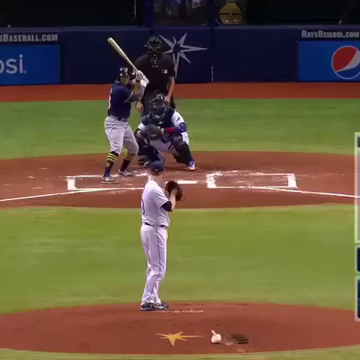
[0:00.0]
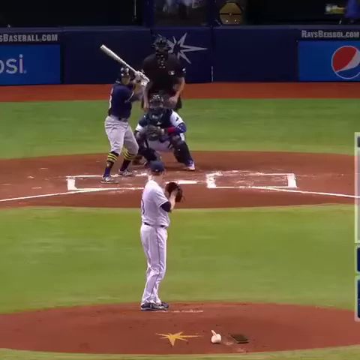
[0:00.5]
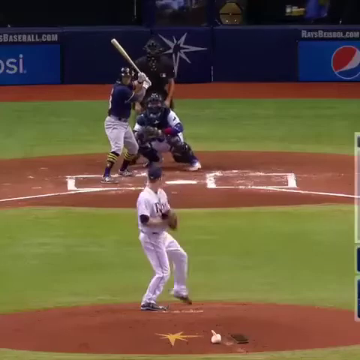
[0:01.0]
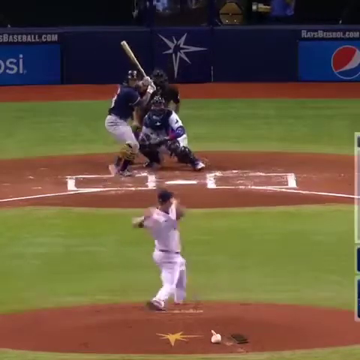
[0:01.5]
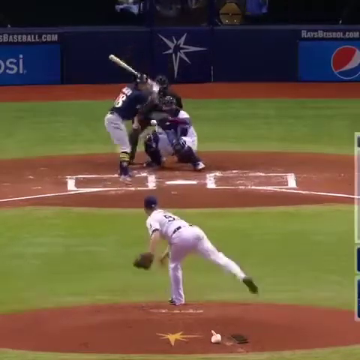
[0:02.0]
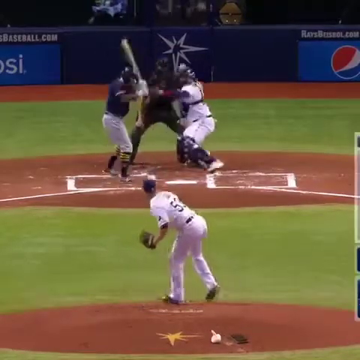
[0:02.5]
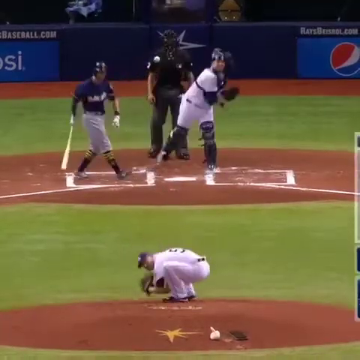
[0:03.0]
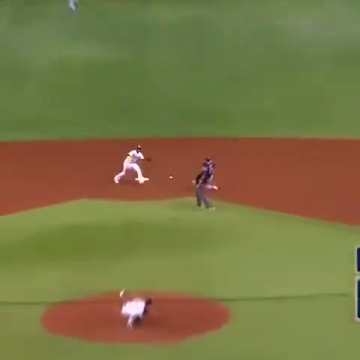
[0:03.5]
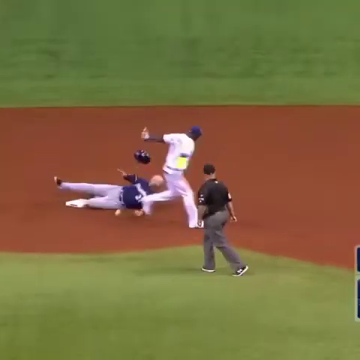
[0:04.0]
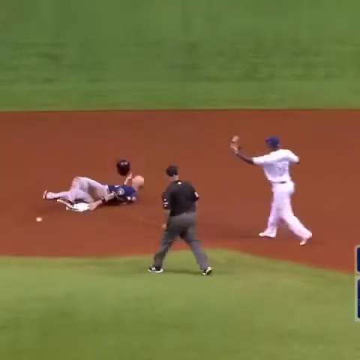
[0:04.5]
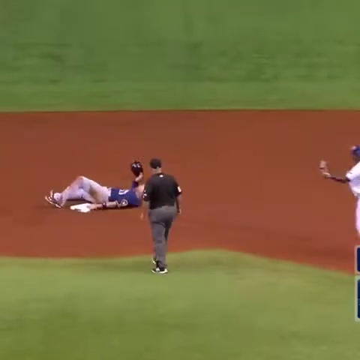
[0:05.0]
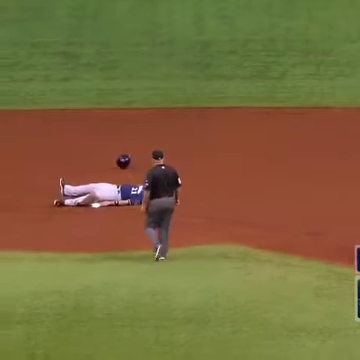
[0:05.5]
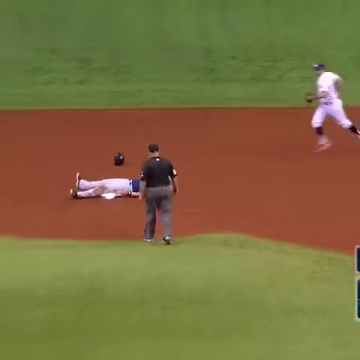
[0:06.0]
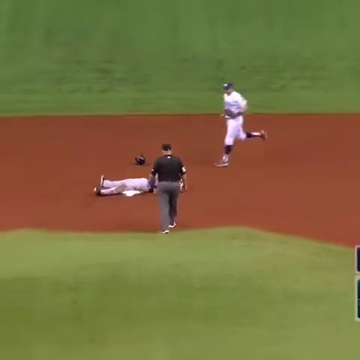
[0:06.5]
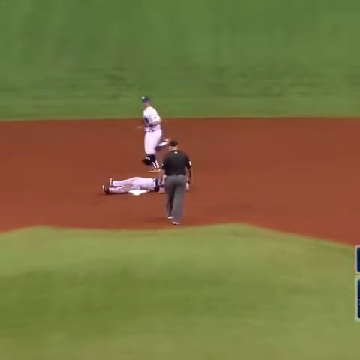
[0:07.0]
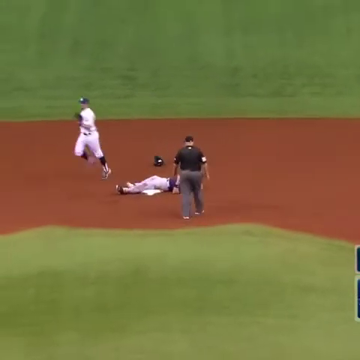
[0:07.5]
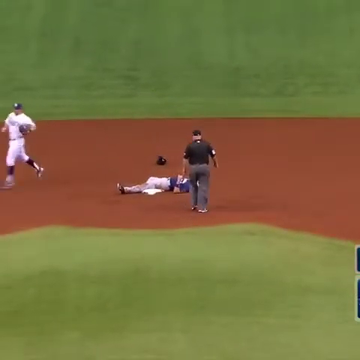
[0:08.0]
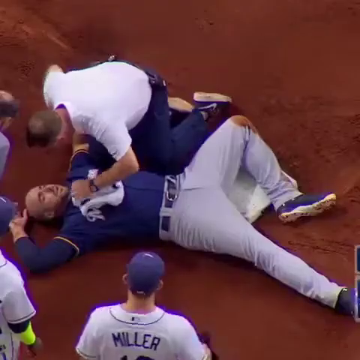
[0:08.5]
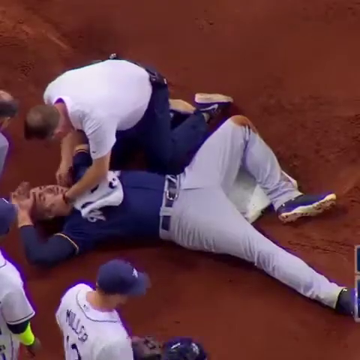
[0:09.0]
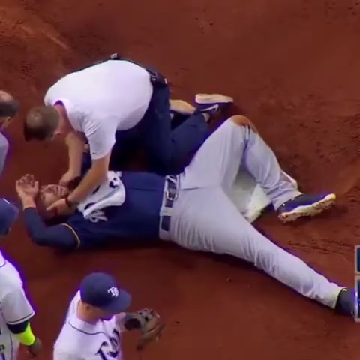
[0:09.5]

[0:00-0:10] Four people are on a baseball field. Closest to the camera, centered in the frame, a person stands in profile with their body facing right, arms raised and bent at the elbows close to their chest, a dark brown baseball mitt in their left hand, and their head turned toward the background. A catcher crouches low to the ground in a full catcher's uniform, including a helmet, a glove and shin guards. Behind the catcher is a person all in black, and in front of the catcher is a person holding a bat. The batter wears white gloves, has their body partially oriented to the side and knees slightly bent, and holds a white bat over their head with arms raised and bent at the elbows. The pitcher throws the ball with their left arm in a wide, sweeping, fast motion, stepping out first with the left leg and then with the right. The batter steps with their left foot, then moves their entire body backwards, thrusting the hip back to avoid the ball. The catcher then stands up and throws the ball back to the pitcher.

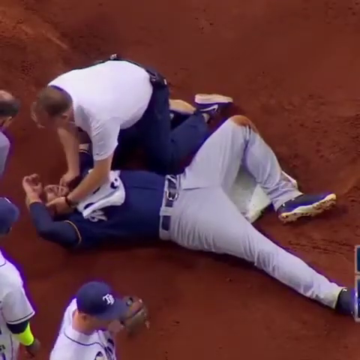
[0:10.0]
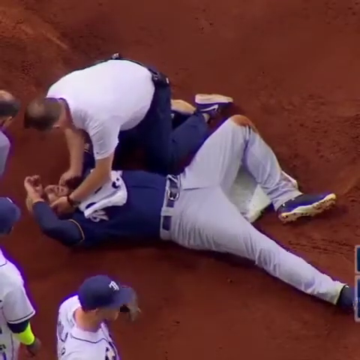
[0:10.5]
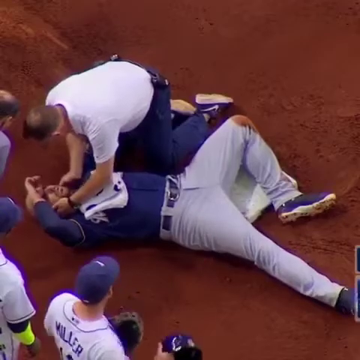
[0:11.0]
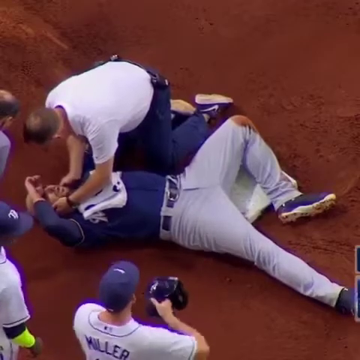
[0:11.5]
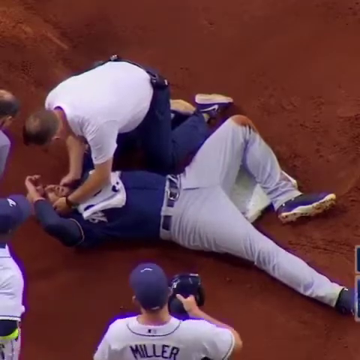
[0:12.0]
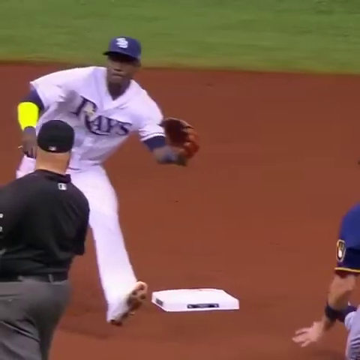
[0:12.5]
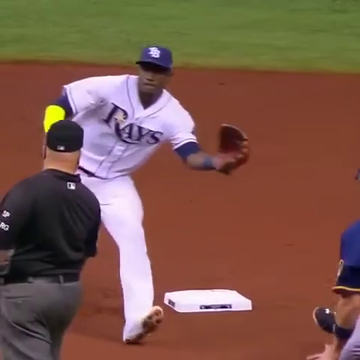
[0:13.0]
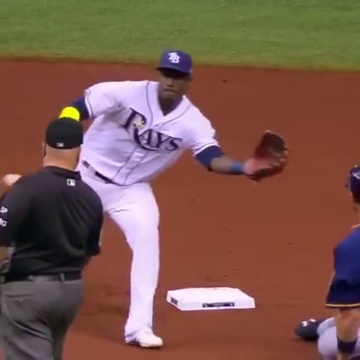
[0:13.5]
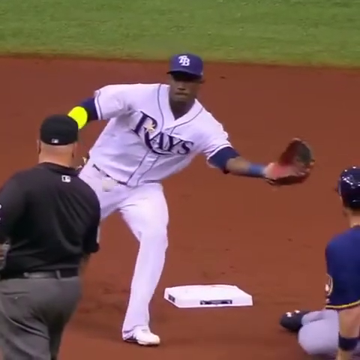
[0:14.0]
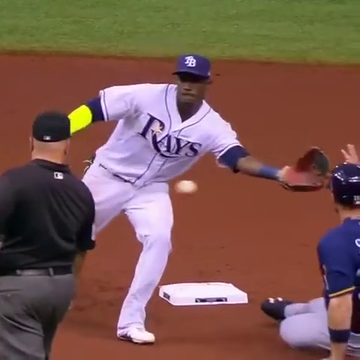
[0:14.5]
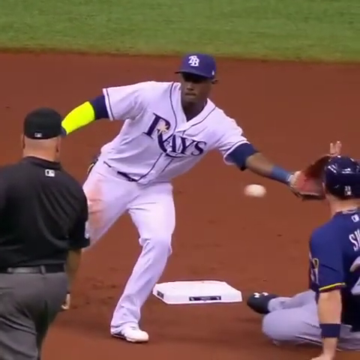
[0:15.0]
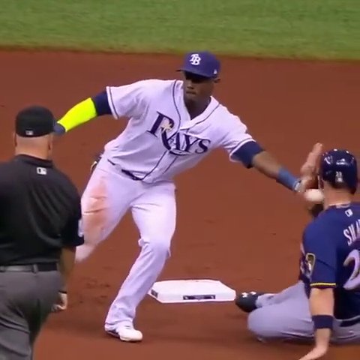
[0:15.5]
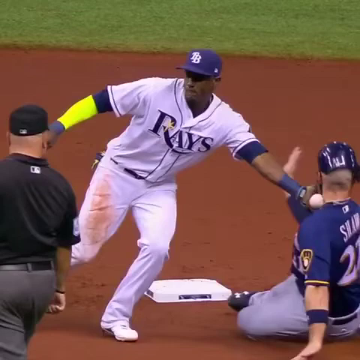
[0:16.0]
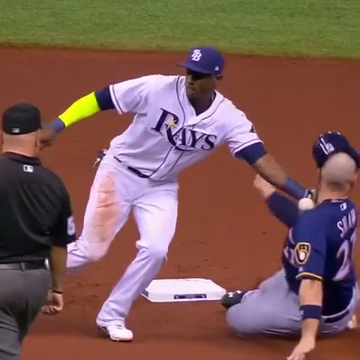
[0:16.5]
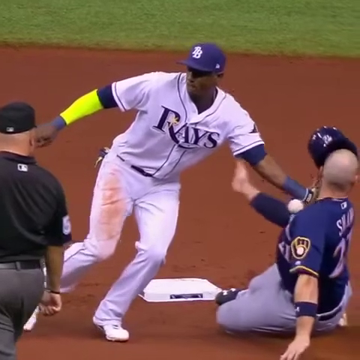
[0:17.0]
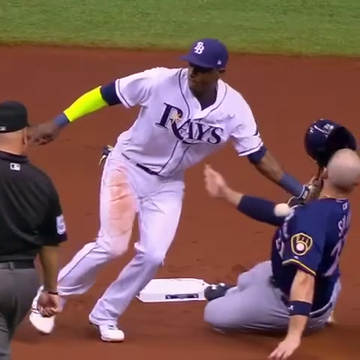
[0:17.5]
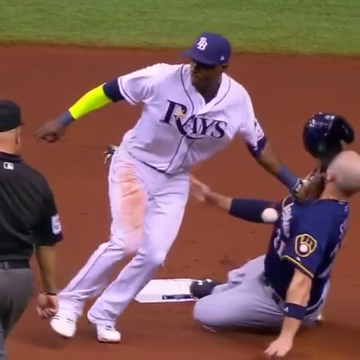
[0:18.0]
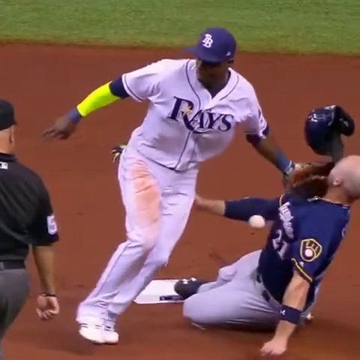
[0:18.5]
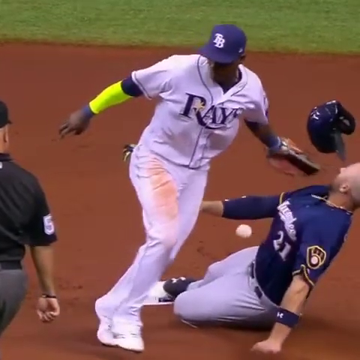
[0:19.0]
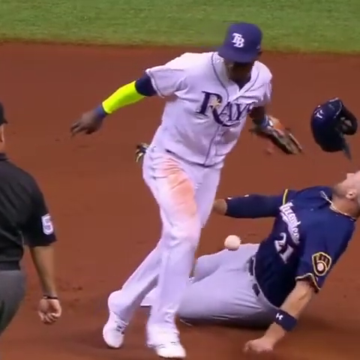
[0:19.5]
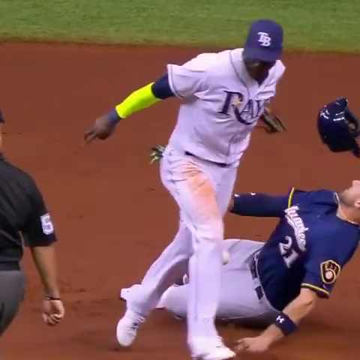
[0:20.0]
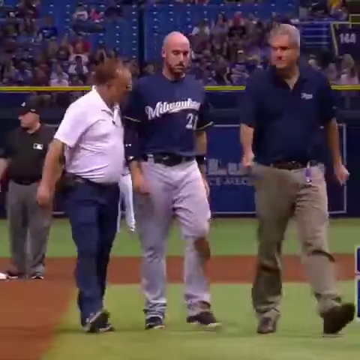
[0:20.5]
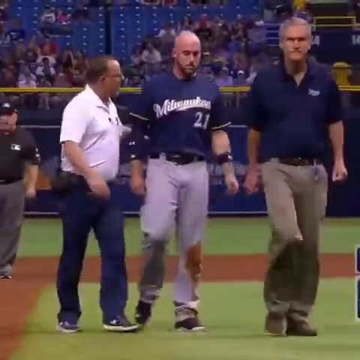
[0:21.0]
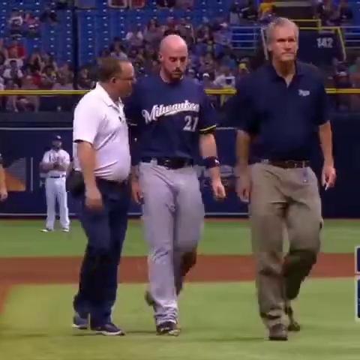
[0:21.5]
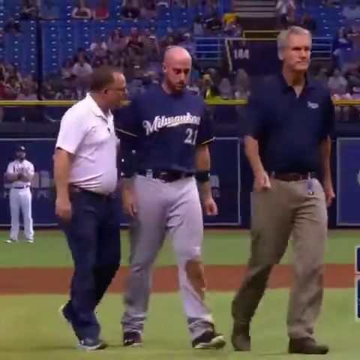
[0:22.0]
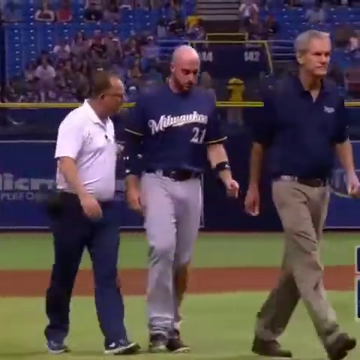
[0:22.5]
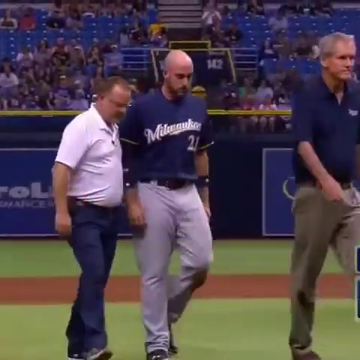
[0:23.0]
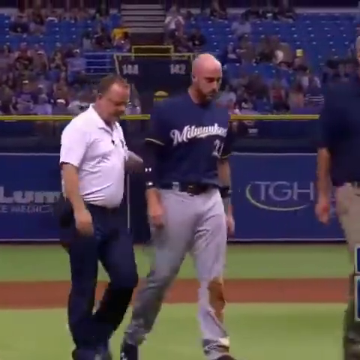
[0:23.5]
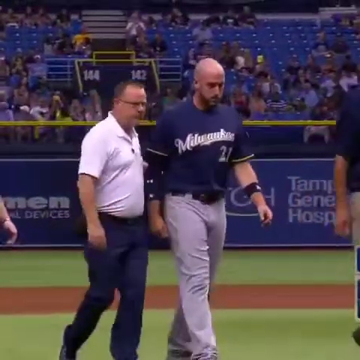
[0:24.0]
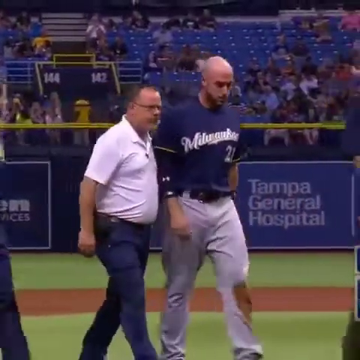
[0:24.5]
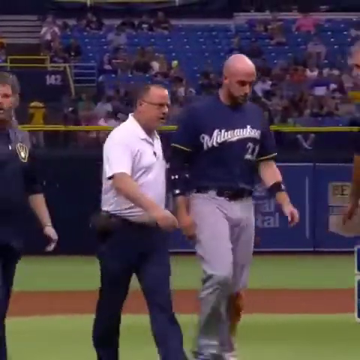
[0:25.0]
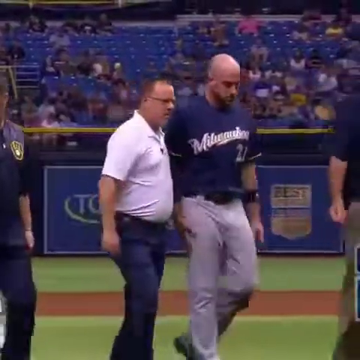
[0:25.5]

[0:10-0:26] A person lies on their back on the ground, wearing gray pants and a navy long-sleeved shirt. Their left leg is bent at the knee and swung out wide so the knee almost touches the ground, while the other leg lies straight out on the ground. Their right arm is raised to their head with a fist, the hand resting on their forehead, and they are moving their mouth, speaking. A person in a white t-shirt and navy pants is crouched over them, on their knees with shins flat on the ground, with hands on either side of the face of the person on the ground. In a new shot, a catcher wearing all white with a bright yellow arm guard on their right arm moves toward the middle of the screen in slow motion, extending their left hand with a baseball mitt to catch a baseball. As they reach for the ball, another person slides into the frame from the right, very close to the ground, with their upper body upright and legs bent, sliding on the dirt. As the catcher tries to get the ball, it slams into the left side of the sliding person's face, knocking their helmet into the air. The sliding person's right arm moves toward the person in white, and the baseball falls to the ground. A new view shows three people walking on the field. In the middle is the person who was on the ground, facing the camera, with a dirt stain on their lower pants. On the right is a person who looks like an older man with gray hair, also facing the camera. On the left, a man has his left arm on the middle person's back, his head turned toward them, and is speaking. All of them walk at a medium pace with their arms gently swinging.